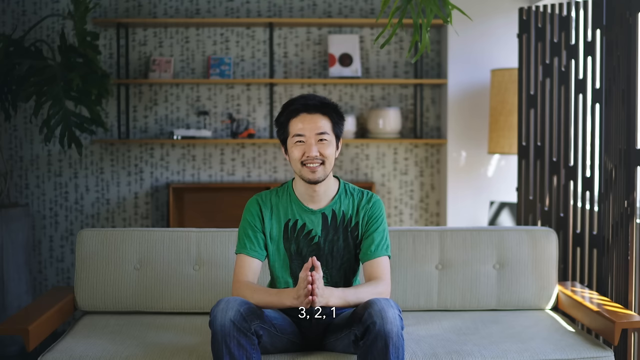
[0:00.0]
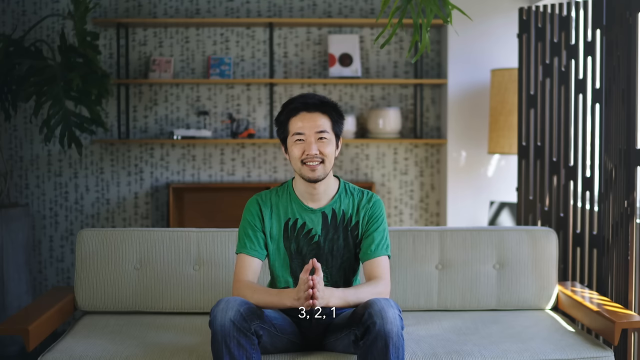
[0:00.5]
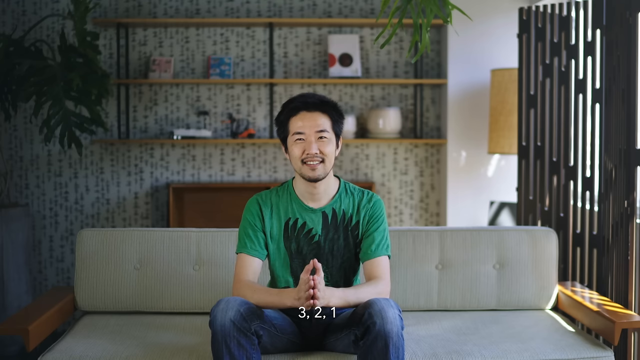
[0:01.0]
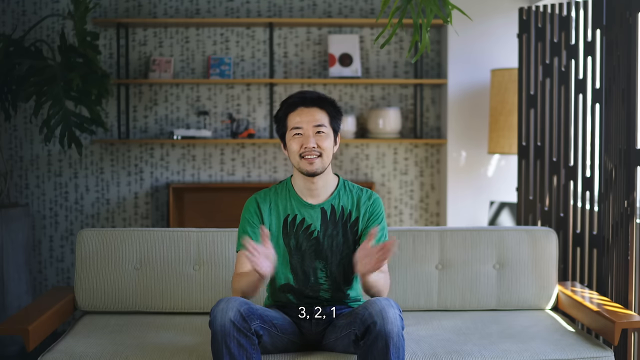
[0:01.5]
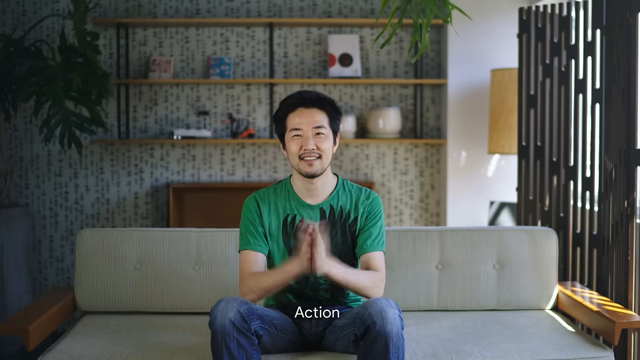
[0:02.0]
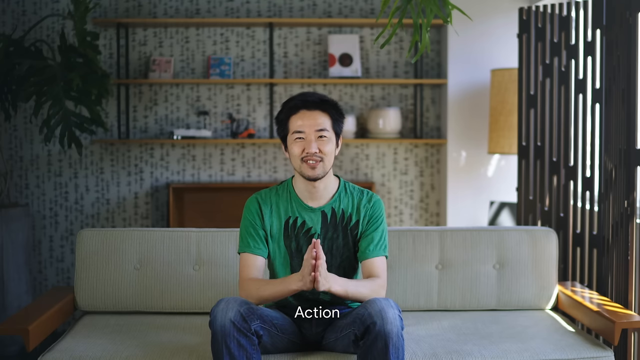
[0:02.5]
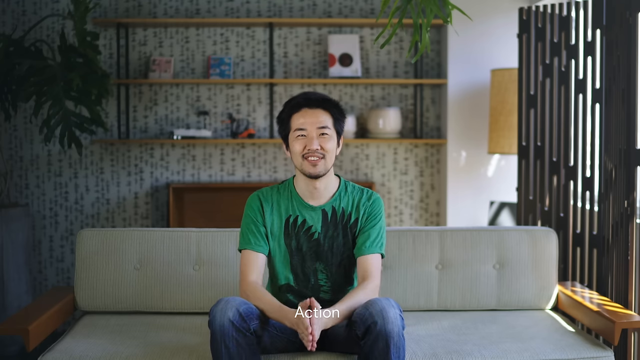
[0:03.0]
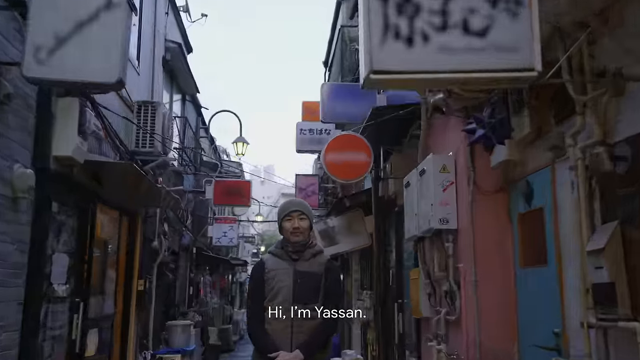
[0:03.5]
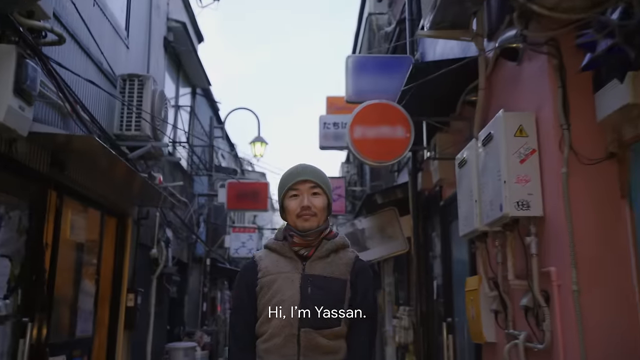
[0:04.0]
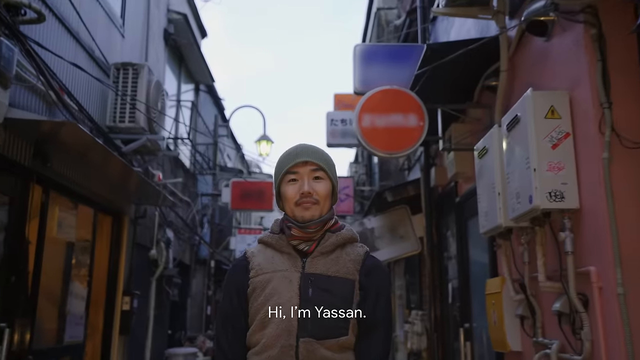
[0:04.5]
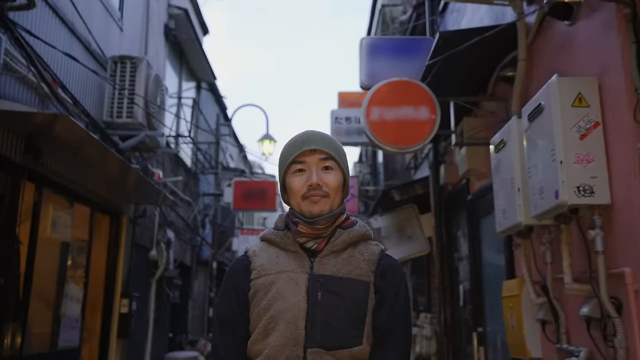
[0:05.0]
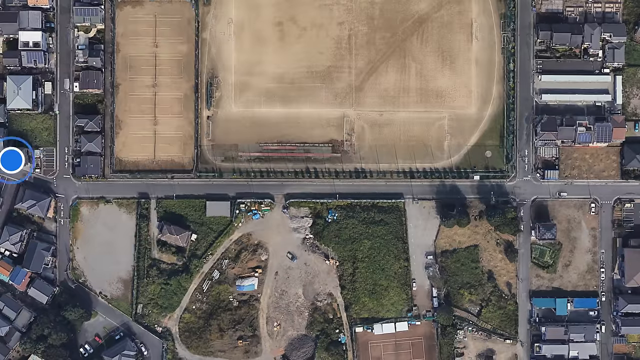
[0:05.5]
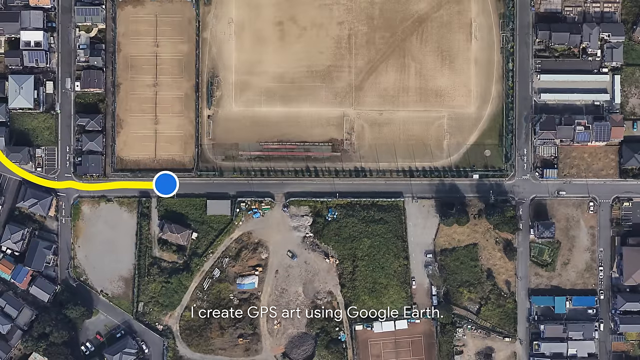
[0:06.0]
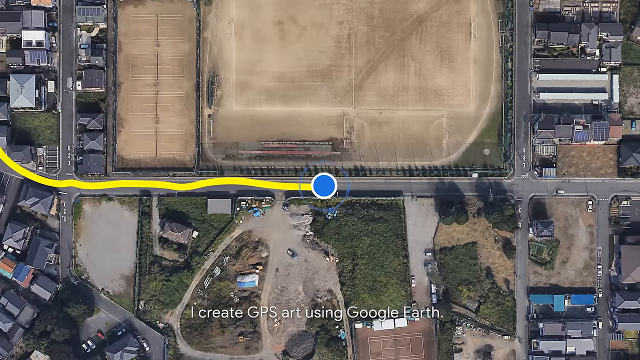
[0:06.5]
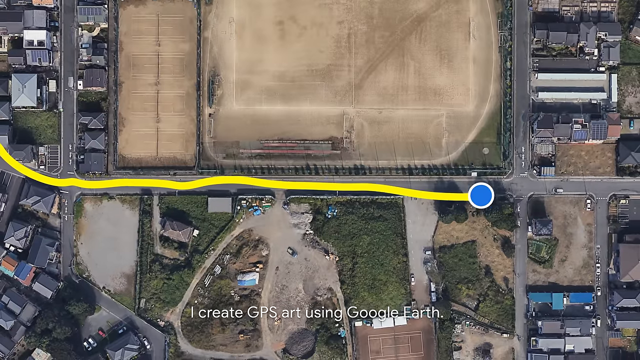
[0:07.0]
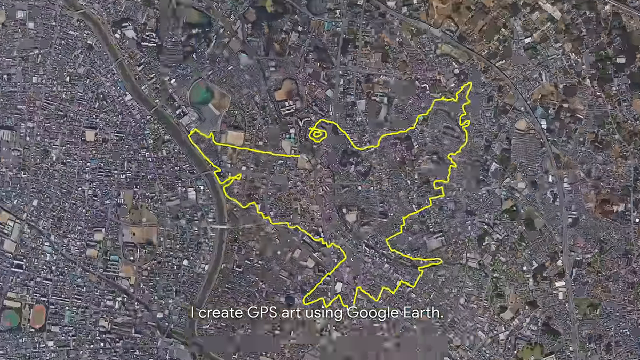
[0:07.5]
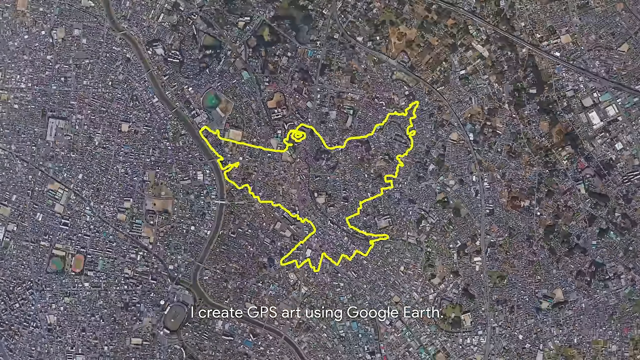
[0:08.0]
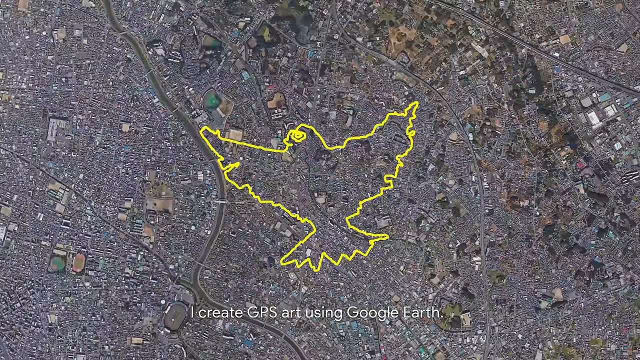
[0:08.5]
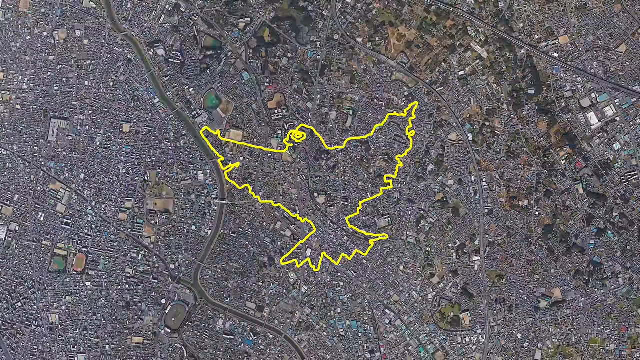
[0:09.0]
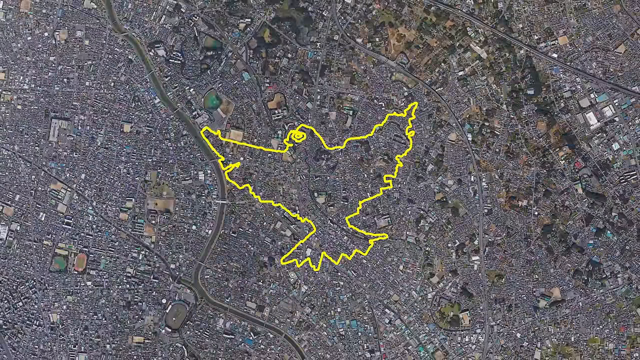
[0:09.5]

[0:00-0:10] An Asian man sits on a couch at the beginning, and text on screen reads "hi, I'm Yesan. I create GPS art using Google Earth." He holds his hands together, widens and opens them, then puts them back together, smiling as he says something. He wears a green t-shirt with a black design on it and blue jeans, and has a mustache, a small amount of facial hair on his chin, and a goatee. Behind him is a wall with some modern wallpaper and a three-tiered shelving unit. The view then pans to a city where the text "hi, I'm Yesan" appears; he stands there wearing a beanie, apparently in a very narrow street. Next comes an aerial view of a city area with a street along which a dot with a line going through it goes, and then the view pans out to a larger city area showing what looks like an eagle design traced in a yellow line.